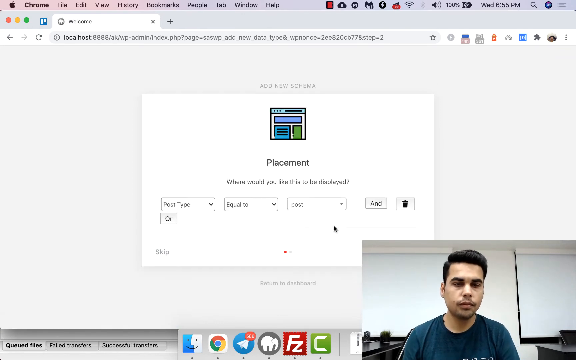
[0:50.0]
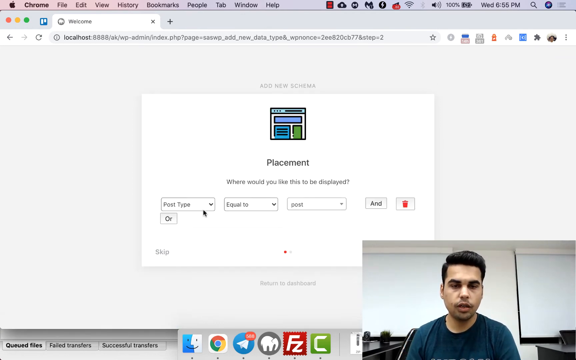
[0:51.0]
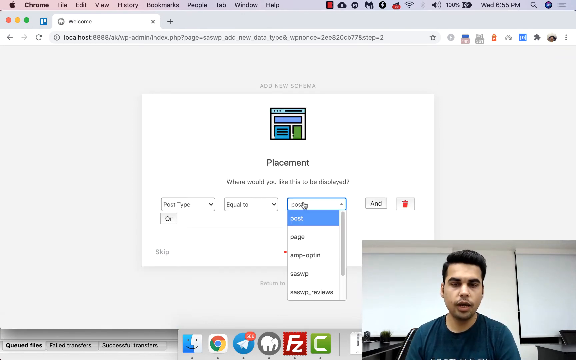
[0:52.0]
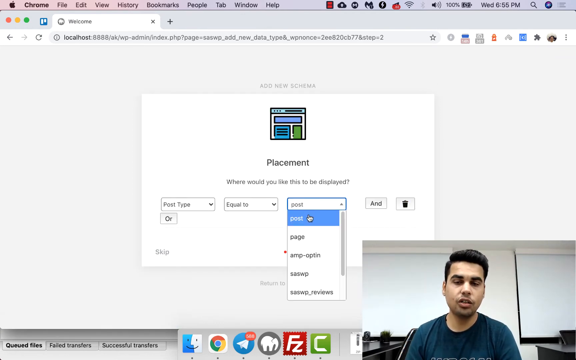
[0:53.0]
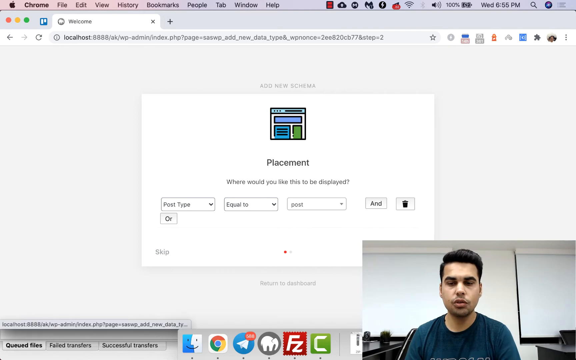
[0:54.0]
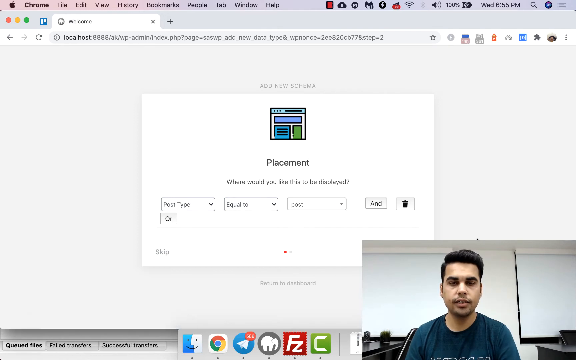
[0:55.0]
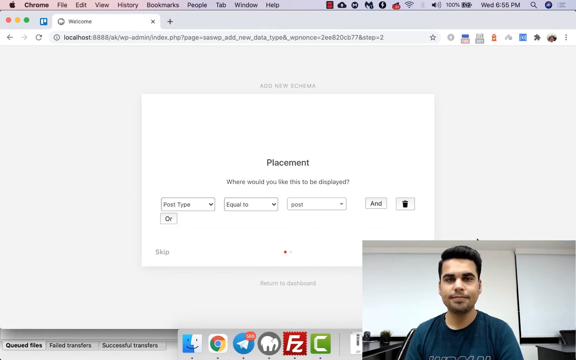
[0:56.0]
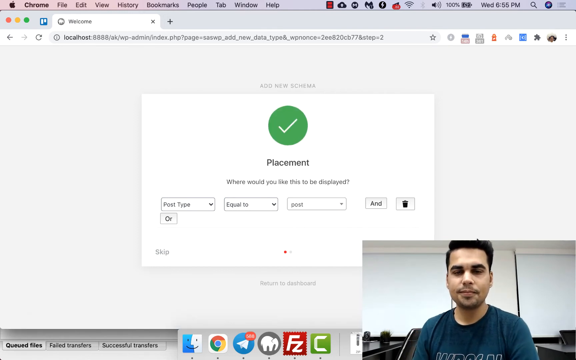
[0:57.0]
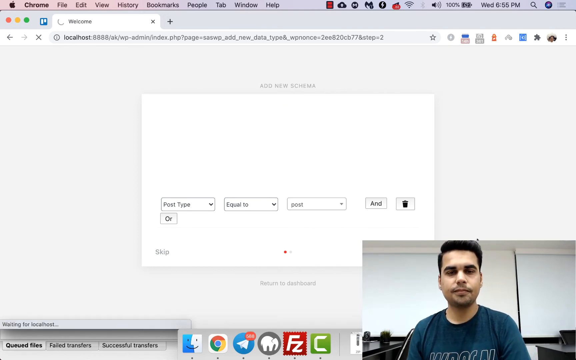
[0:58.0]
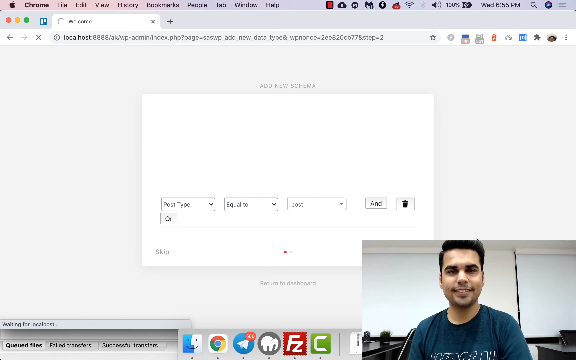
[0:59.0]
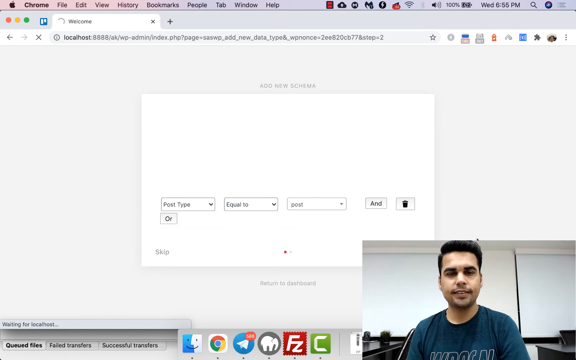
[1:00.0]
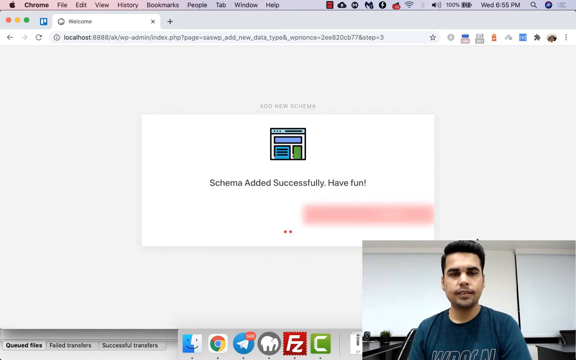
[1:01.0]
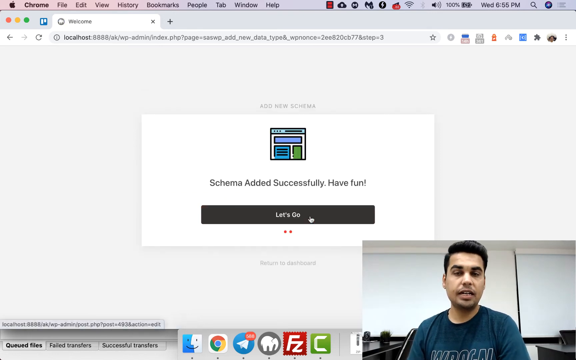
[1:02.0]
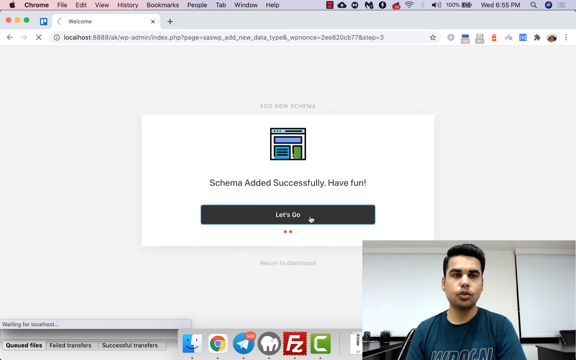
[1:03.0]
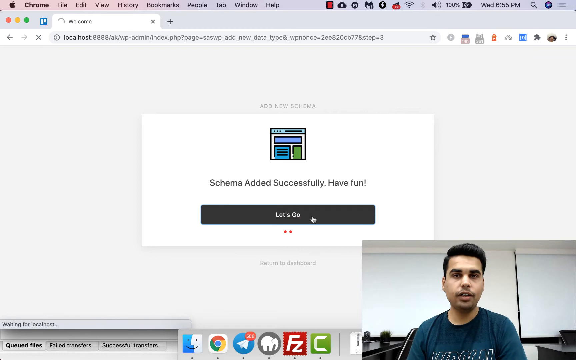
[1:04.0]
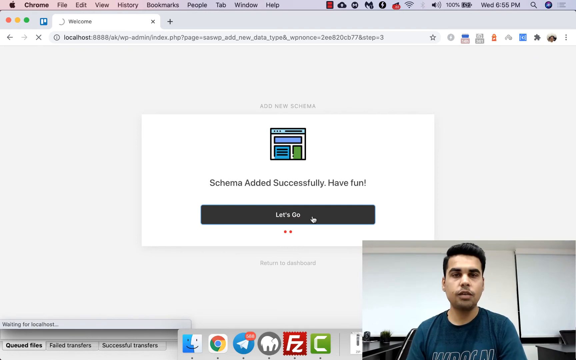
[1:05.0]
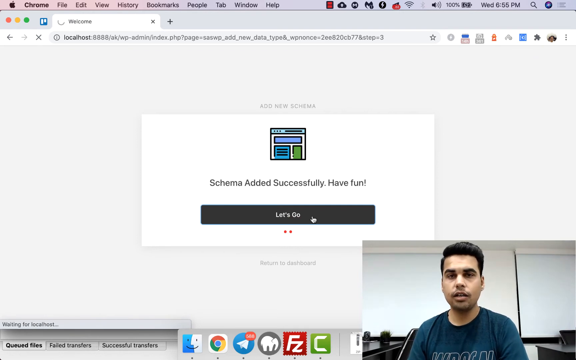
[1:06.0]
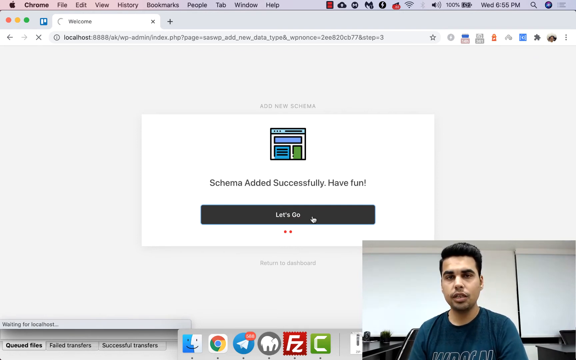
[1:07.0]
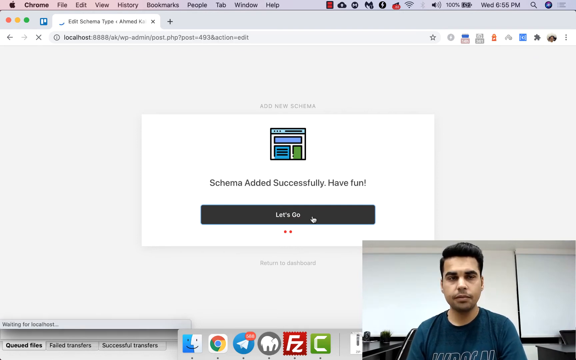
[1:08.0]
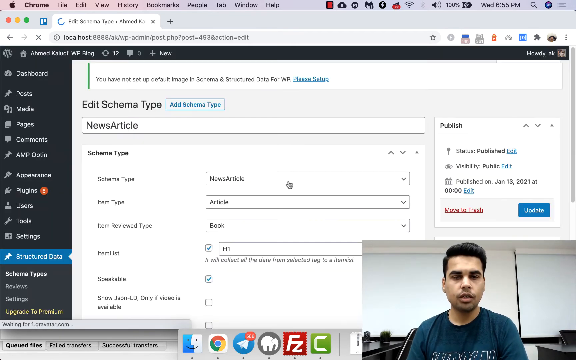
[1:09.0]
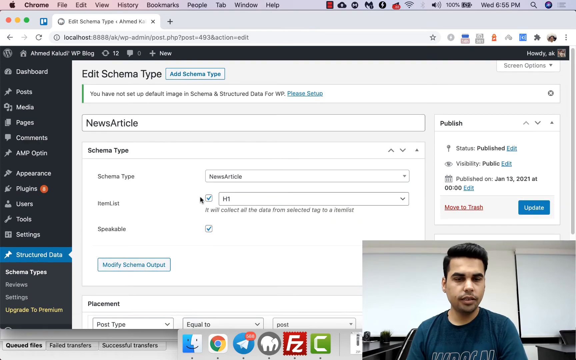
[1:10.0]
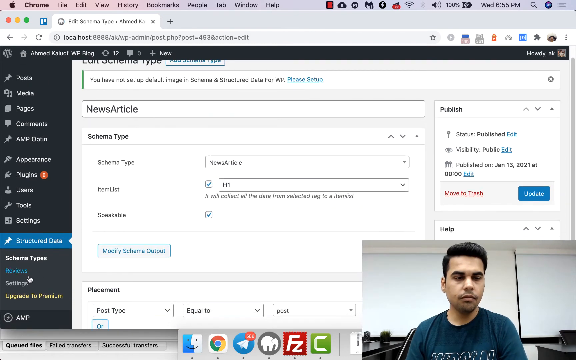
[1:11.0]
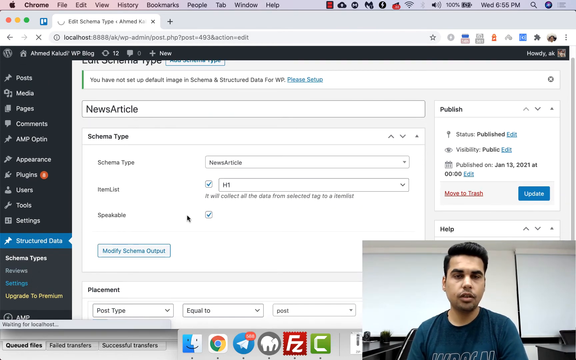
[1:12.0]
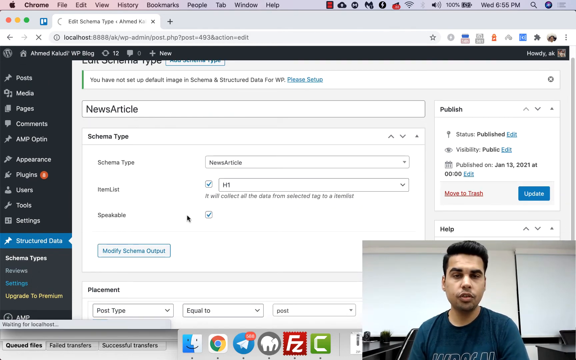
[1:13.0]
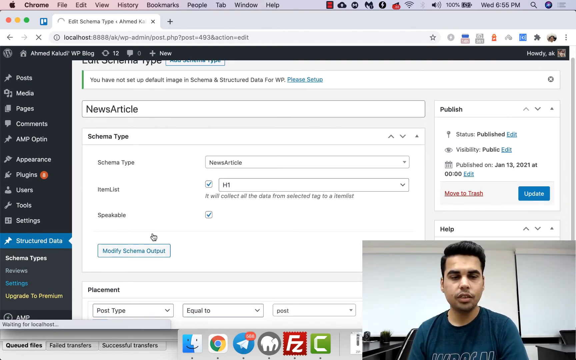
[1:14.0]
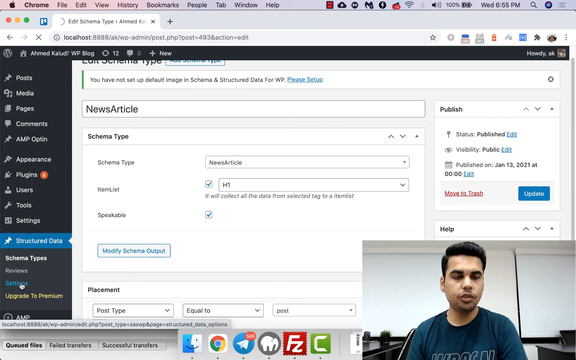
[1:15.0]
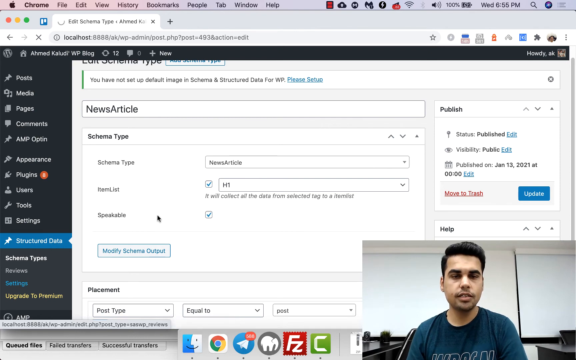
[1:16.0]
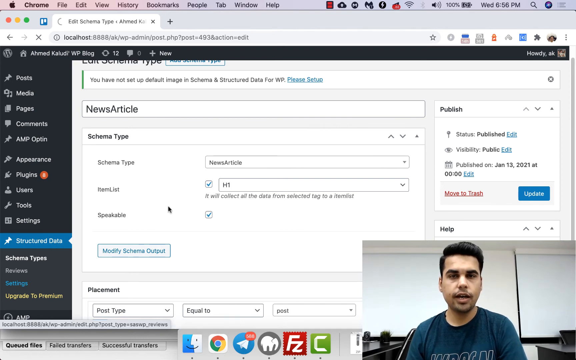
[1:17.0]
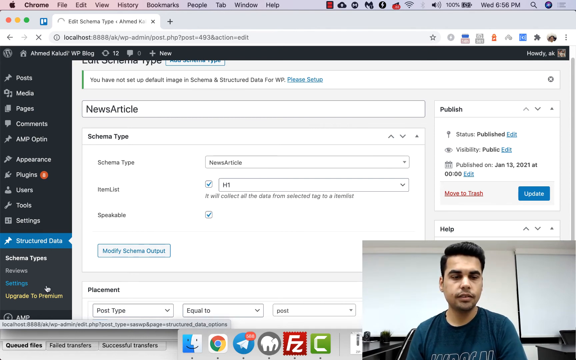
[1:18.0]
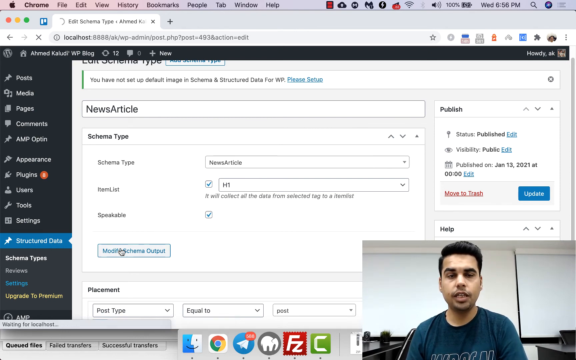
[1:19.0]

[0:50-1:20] He interacts with the drop-down menus, clicking the one that contains the word post. It reveals other options: page, AMP, and SAS WP reviews. He keeps it on post and goes to the next page, which says "schema added successfully, have fun". A big grey button says "let's go", and he clicks it. The view returns to the dashboard, now on a page for editing the schema type. It shows news article, with options such as schema type, item type, item review type, item lists, and speakable, along with the status and when it was published. Without changing any of these settings, he goes to the settings option in the bottom left, and the next page begins to load.